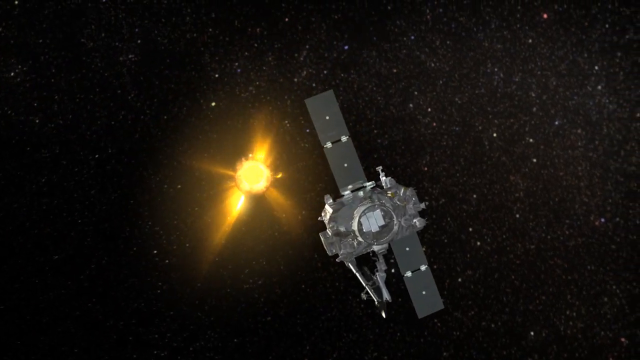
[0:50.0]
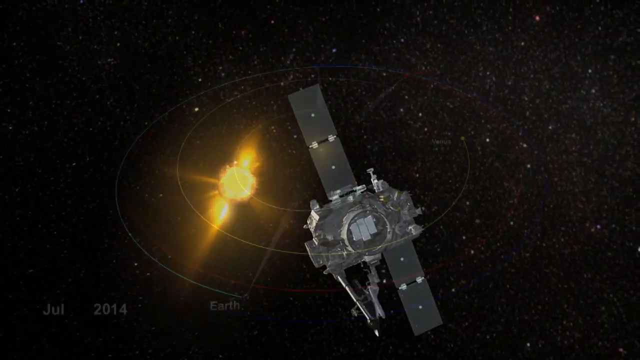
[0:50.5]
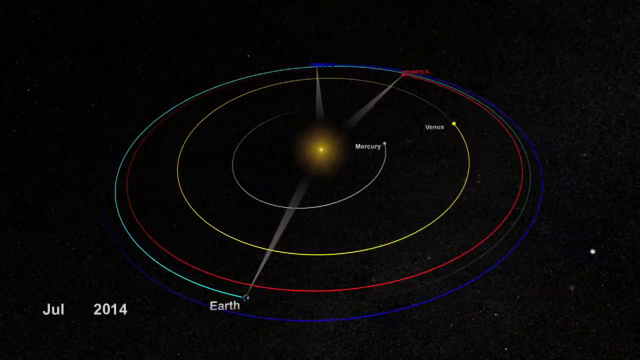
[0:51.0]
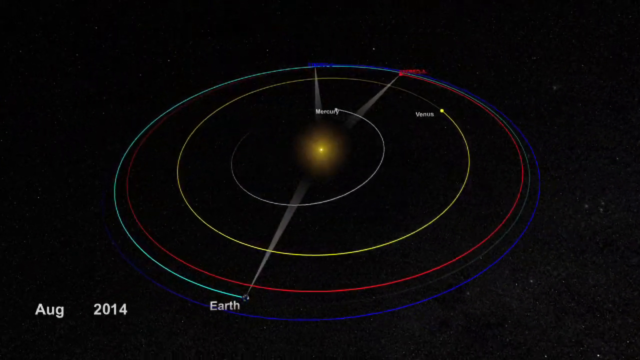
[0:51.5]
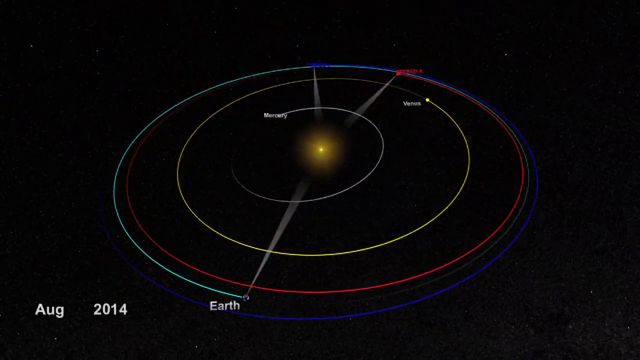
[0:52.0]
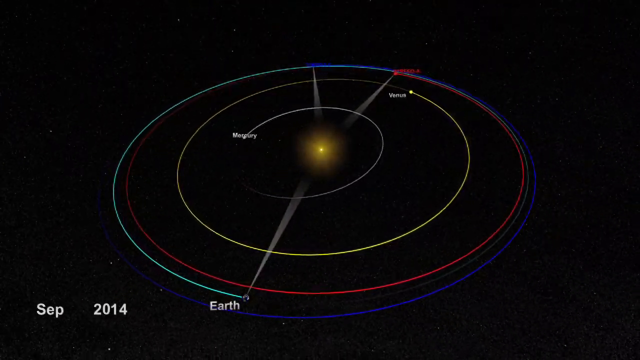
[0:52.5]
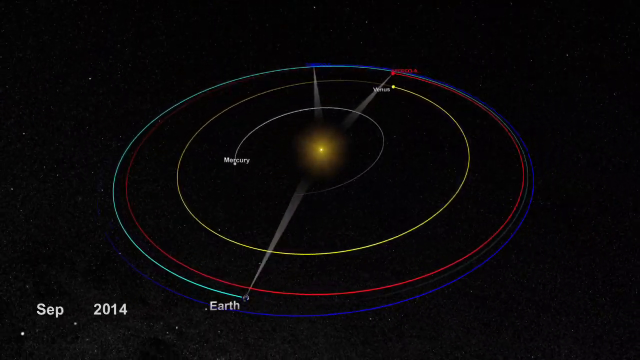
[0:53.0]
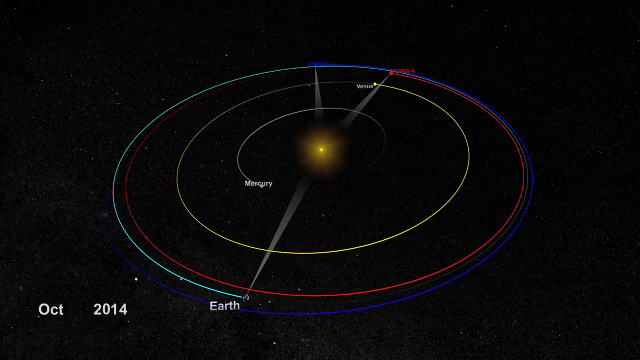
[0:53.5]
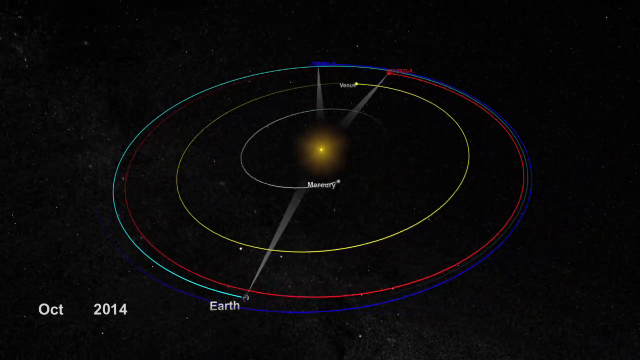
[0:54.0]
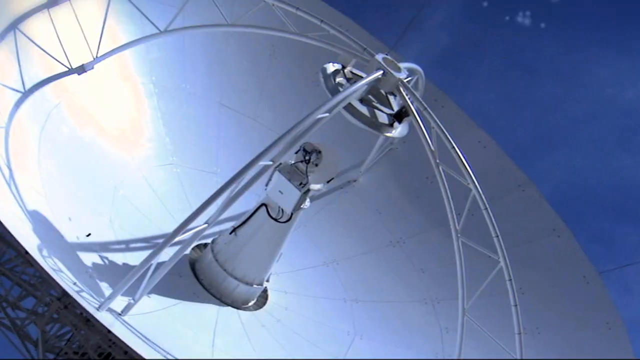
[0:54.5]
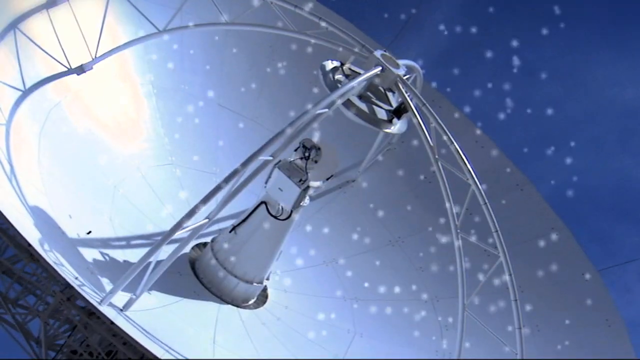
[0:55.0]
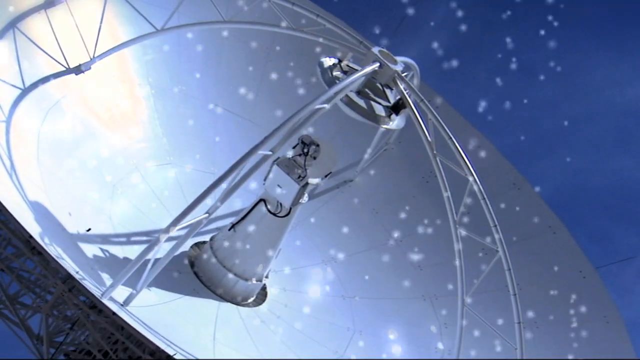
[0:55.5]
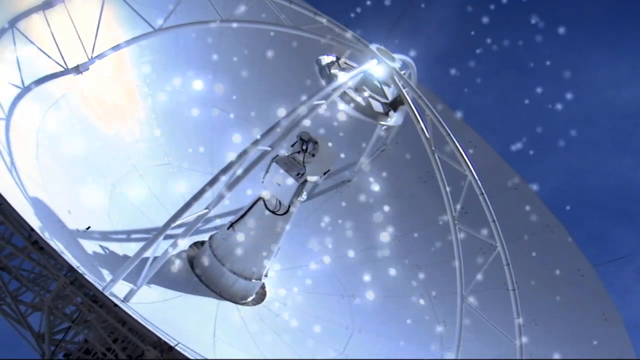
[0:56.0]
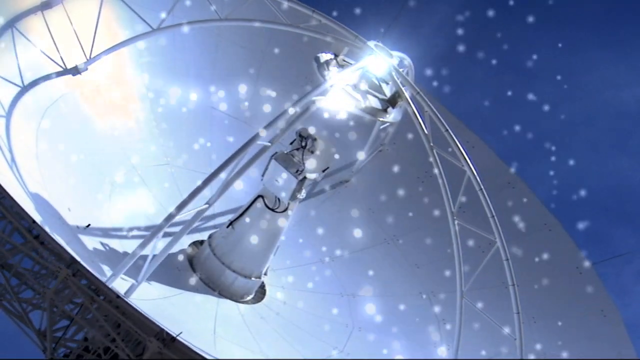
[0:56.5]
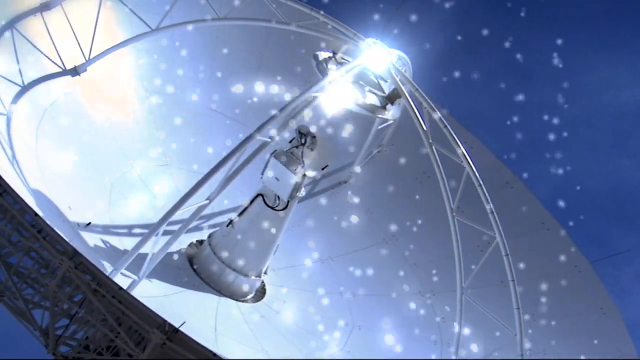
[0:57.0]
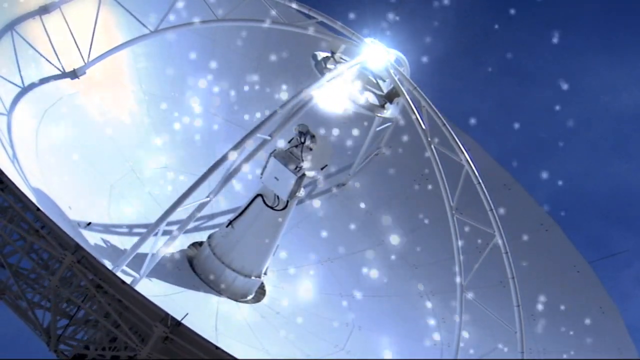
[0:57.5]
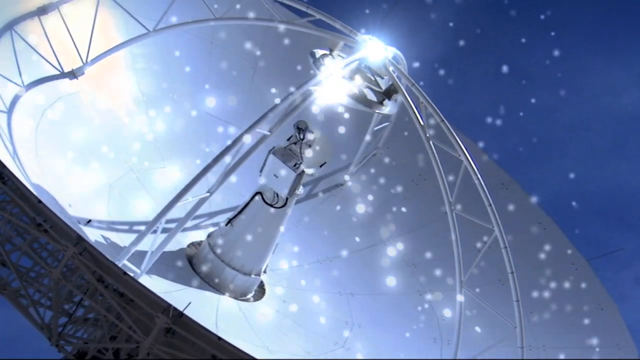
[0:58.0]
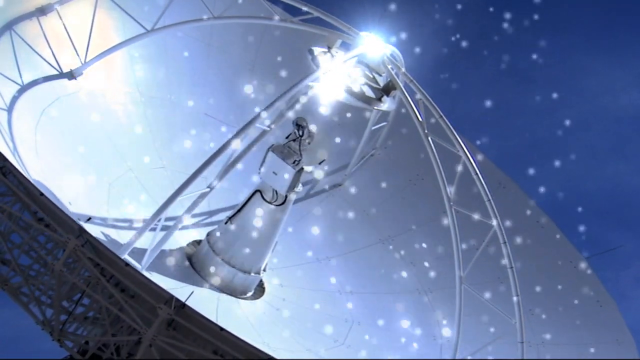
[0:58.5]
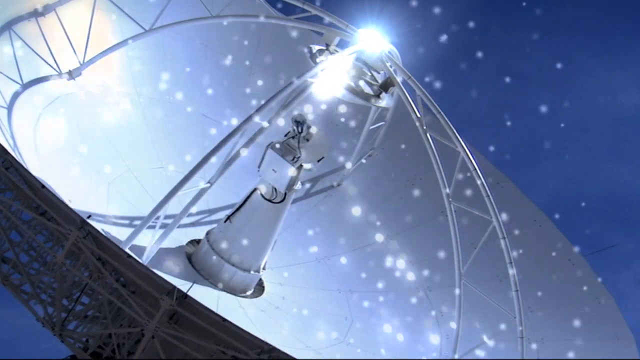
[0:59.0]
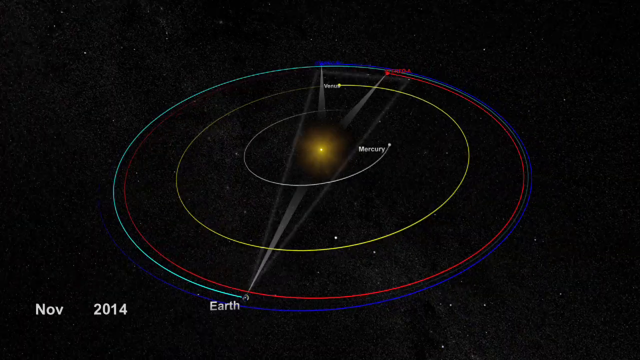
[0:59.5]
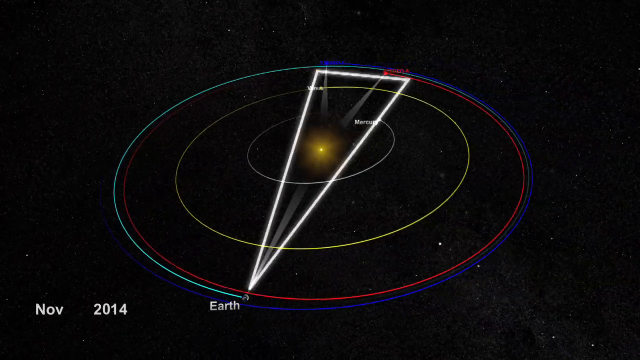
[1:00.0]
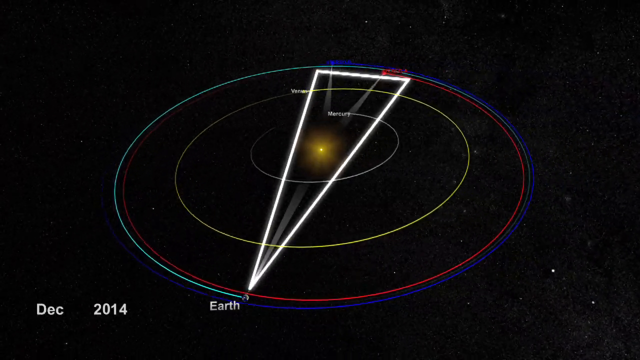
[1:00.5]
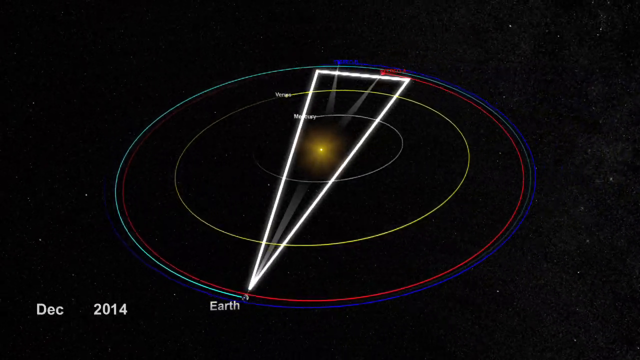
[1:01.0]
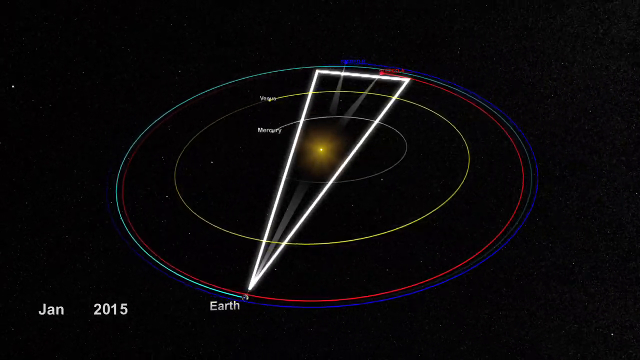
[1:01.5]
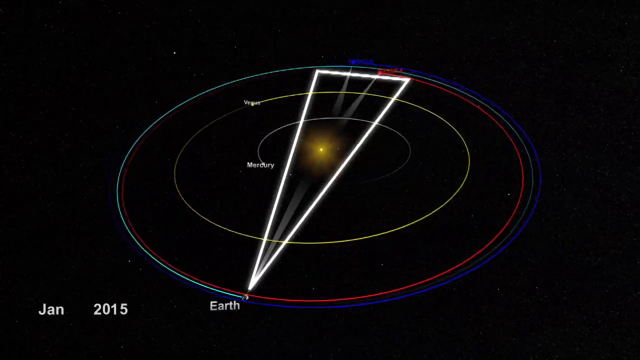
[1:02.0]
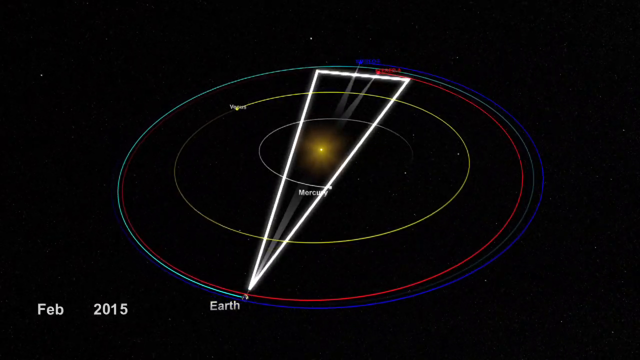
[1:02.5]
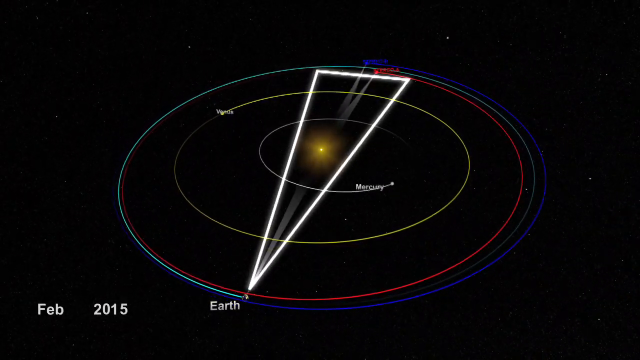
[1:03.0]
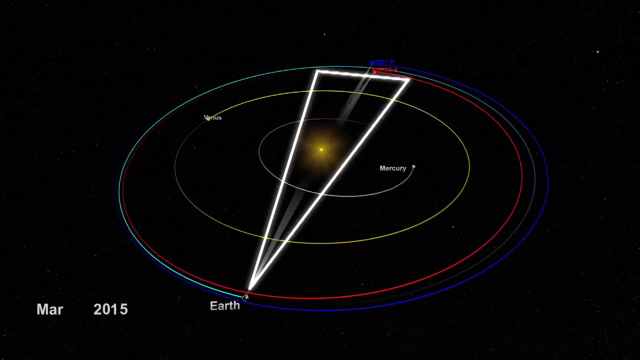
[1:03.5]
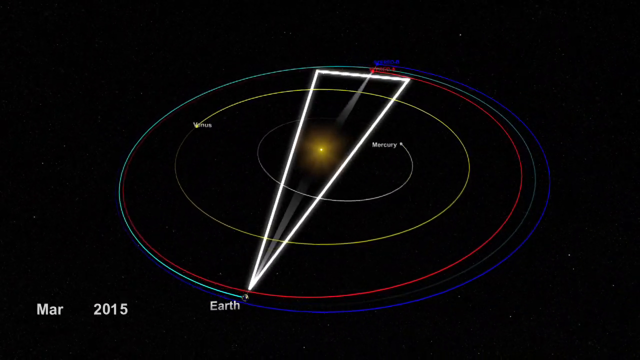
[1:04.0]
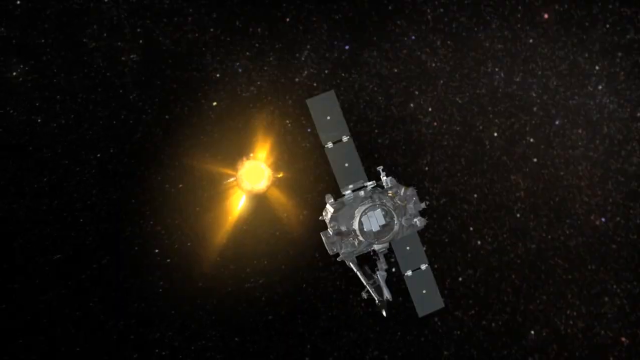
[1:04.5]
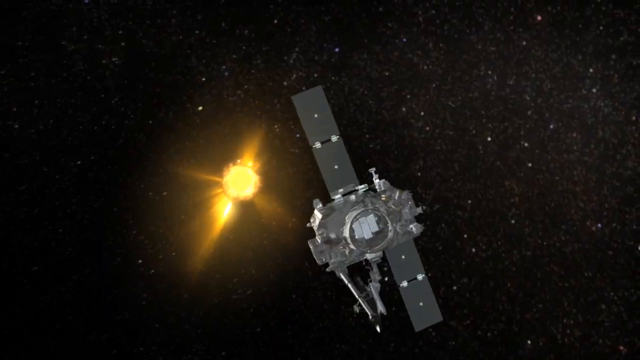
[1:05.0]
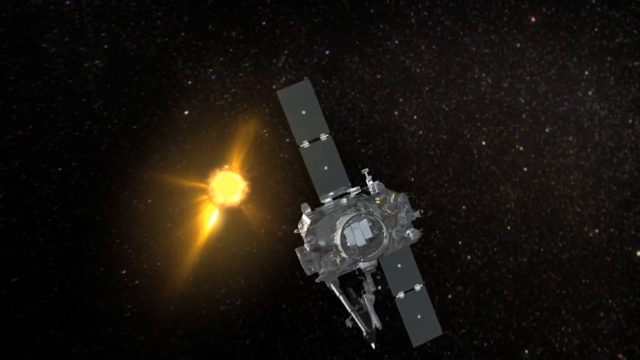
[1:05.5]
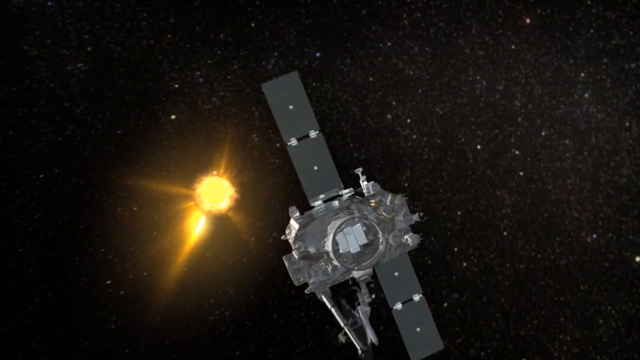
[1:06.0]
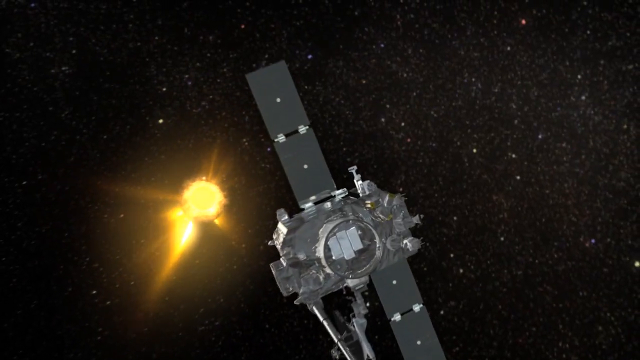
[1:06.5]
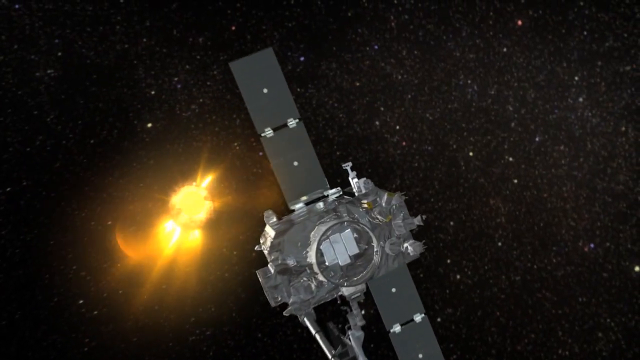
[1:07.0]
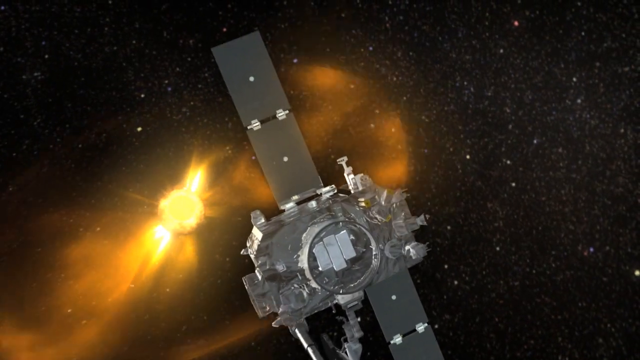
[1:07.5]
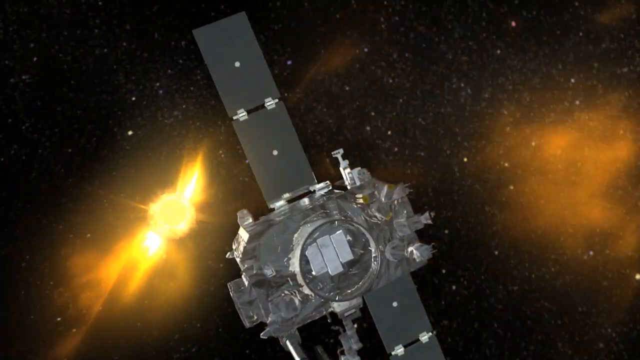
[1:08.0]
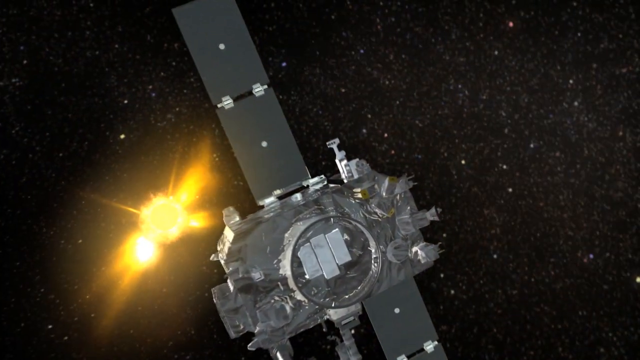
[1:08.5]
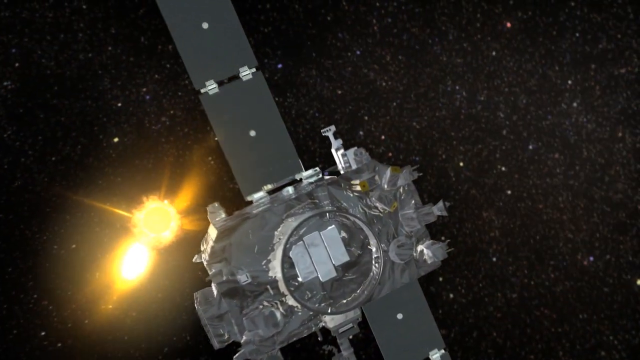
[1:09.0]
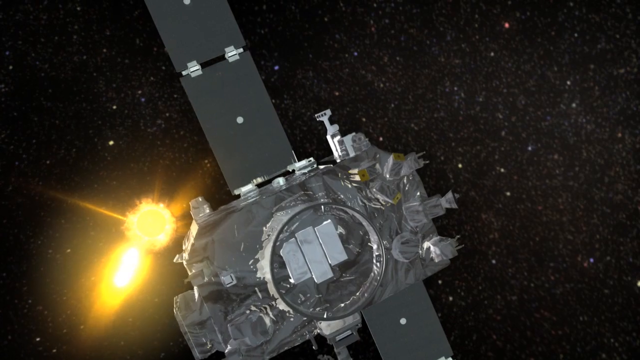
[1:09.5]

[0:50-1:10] A view in space focuses on a satellite with starry space in the background; further away is the Sun, represented as a yellow and orange sphere. The video cuts to a 3D model of Earth, Mercury and Venus slowly rotating around the Sun, along with two satellites that rotate as well. It then cuts to a large satellite dish on Earth slowly tilting its dish upwards, with an added effect of white sparkles that seem to build up in energy at its tip. The 3D model of the solar system returns, with a triangle formed by the two satellites at the top of the screen and Earth. The video goes back to a rendering of one of the satellites pointed towards the Sun, with a large orange beam wave coming from the Sun, and the camera slowly pans in on the satellite.